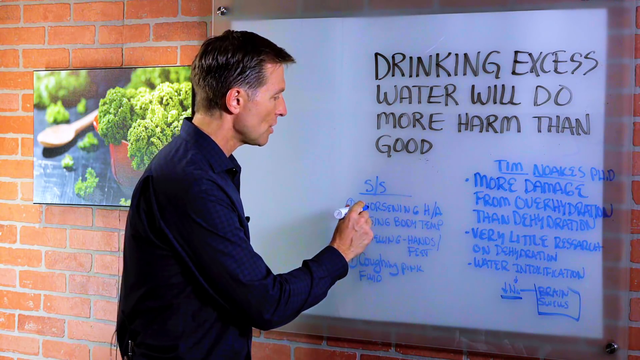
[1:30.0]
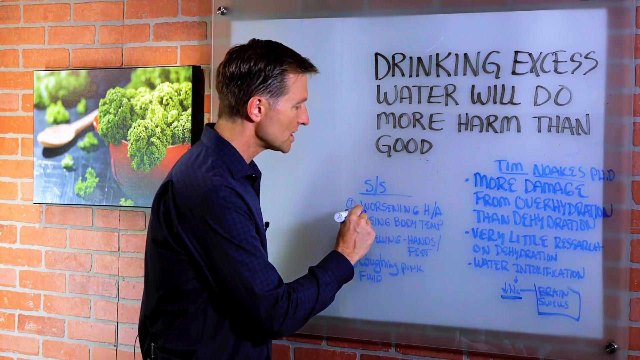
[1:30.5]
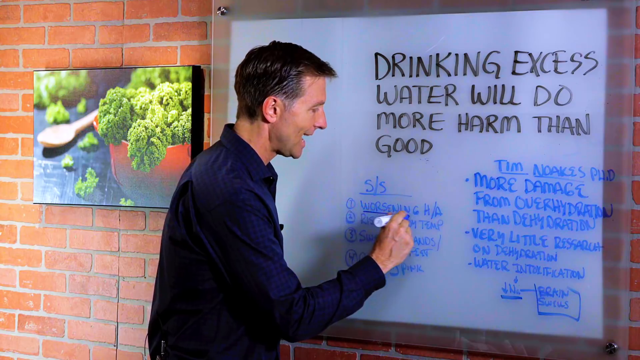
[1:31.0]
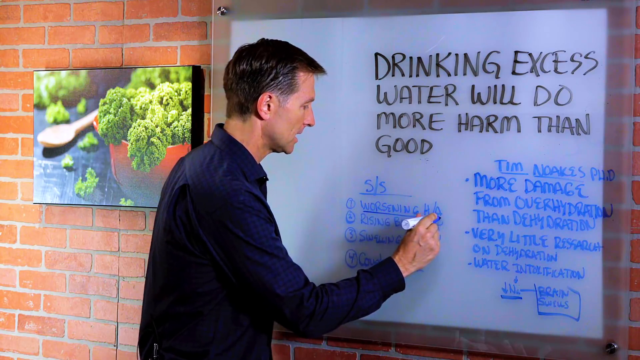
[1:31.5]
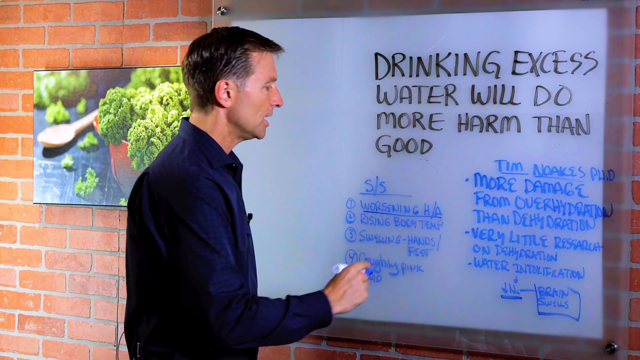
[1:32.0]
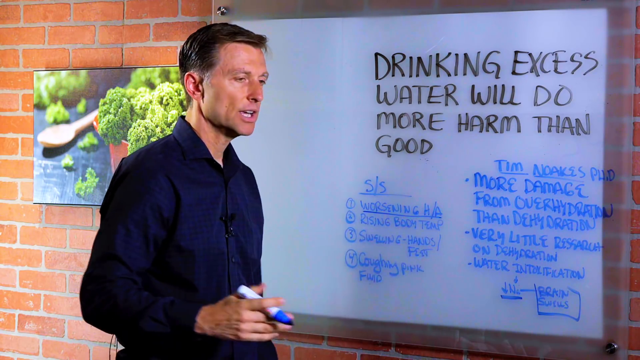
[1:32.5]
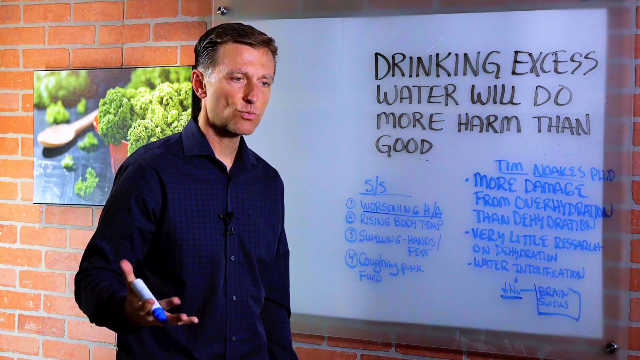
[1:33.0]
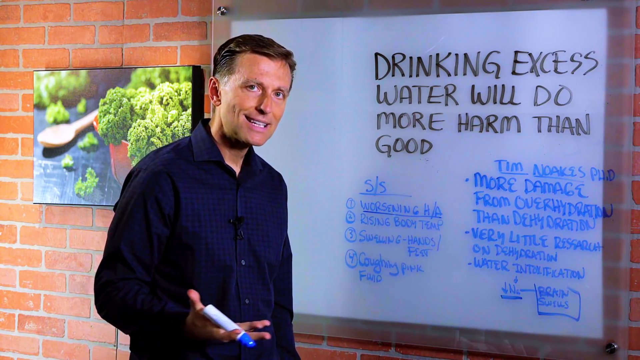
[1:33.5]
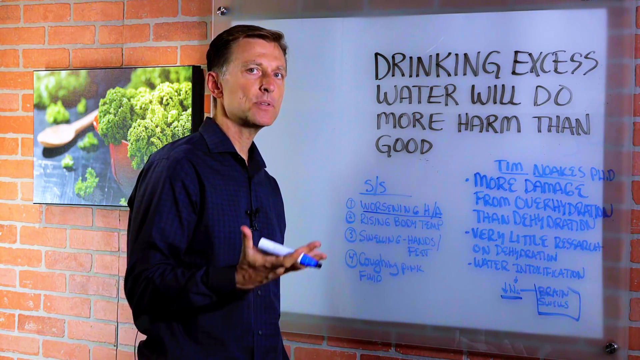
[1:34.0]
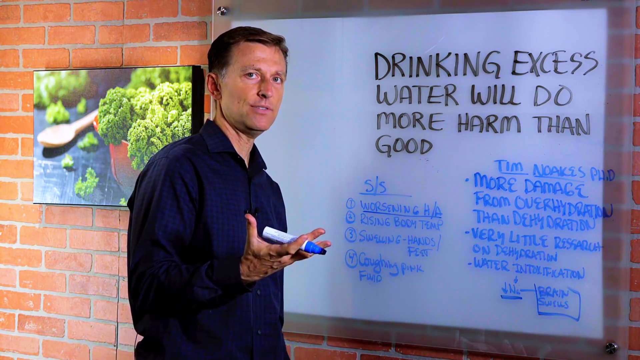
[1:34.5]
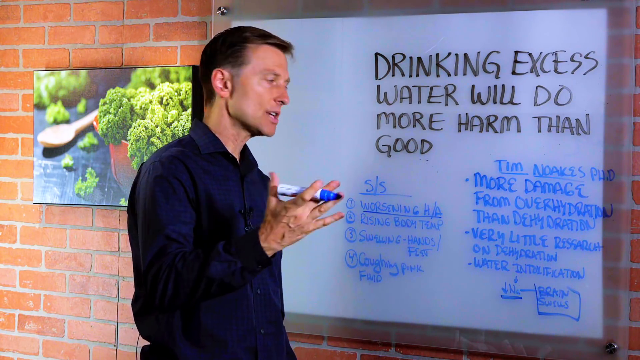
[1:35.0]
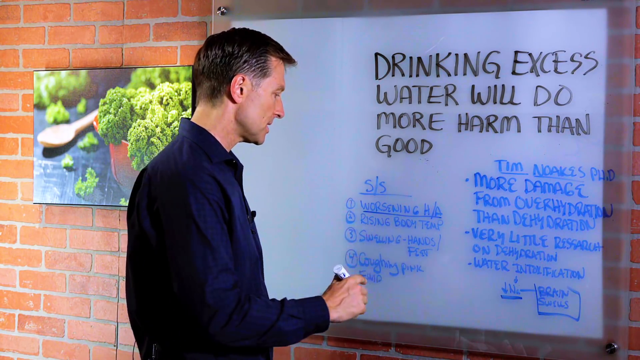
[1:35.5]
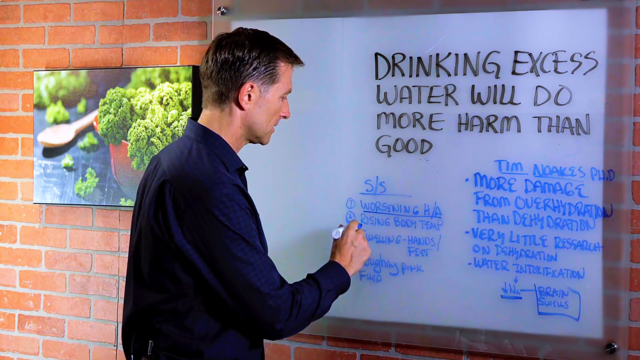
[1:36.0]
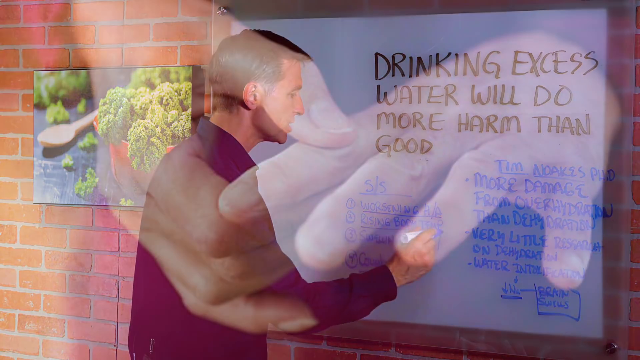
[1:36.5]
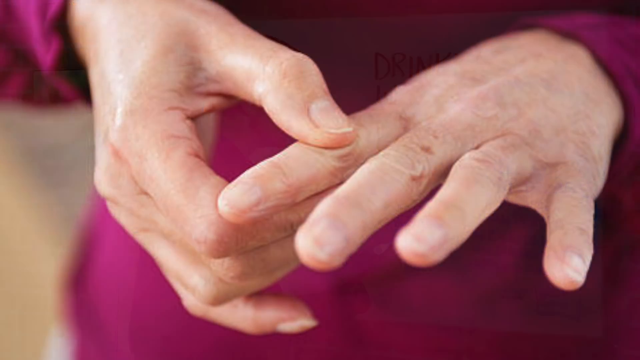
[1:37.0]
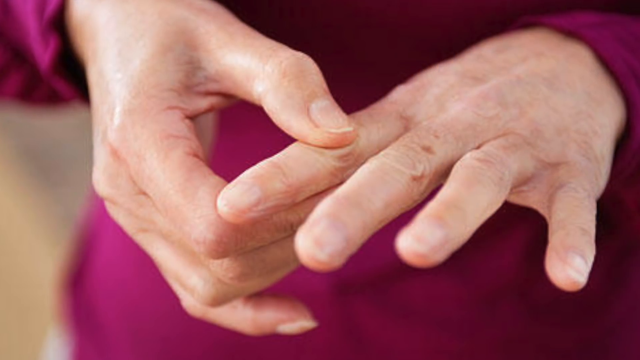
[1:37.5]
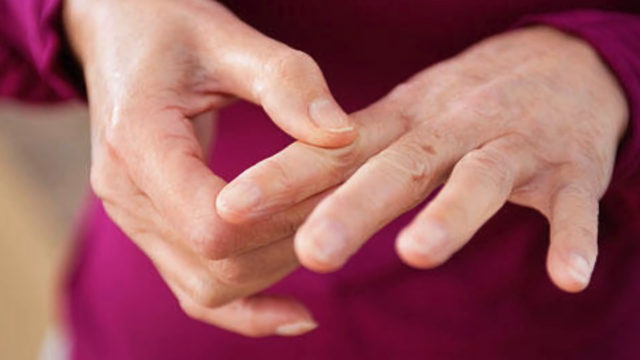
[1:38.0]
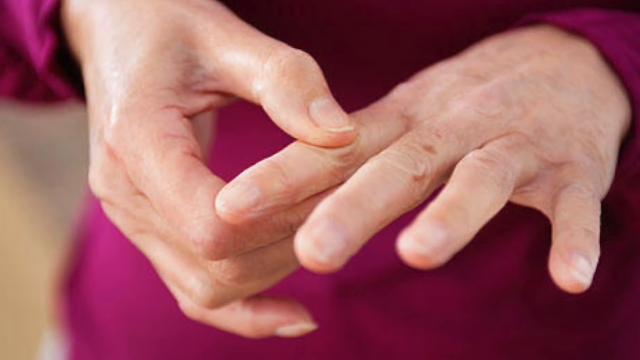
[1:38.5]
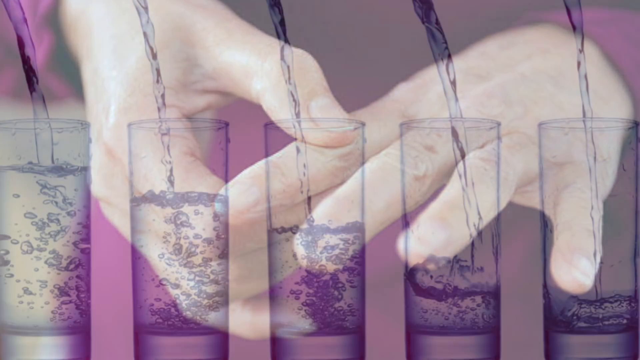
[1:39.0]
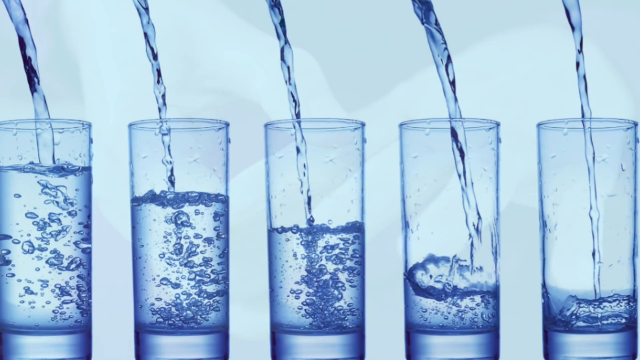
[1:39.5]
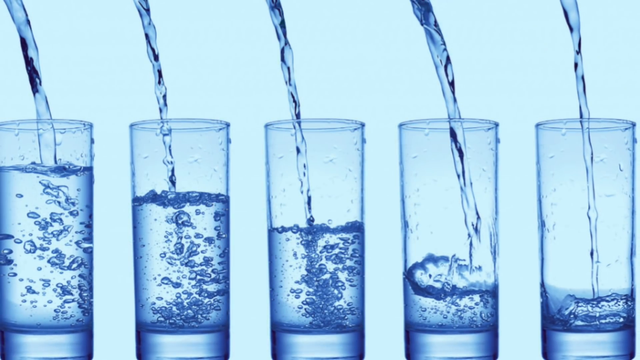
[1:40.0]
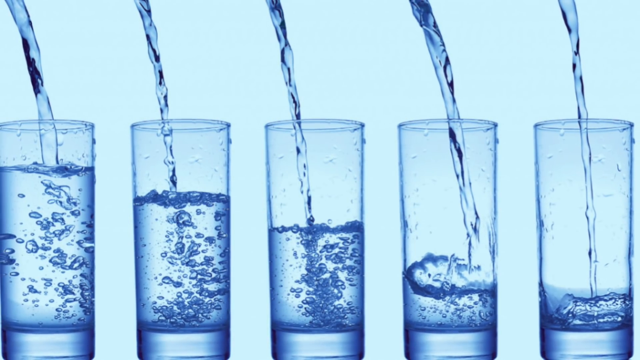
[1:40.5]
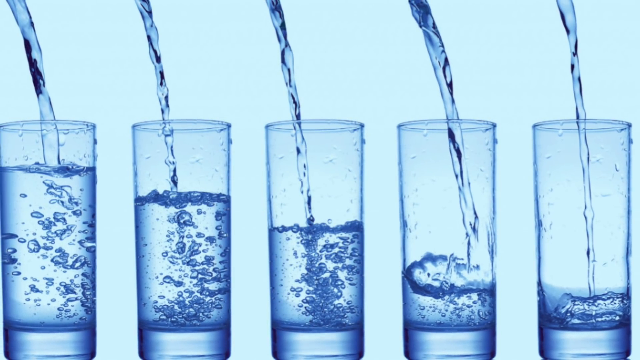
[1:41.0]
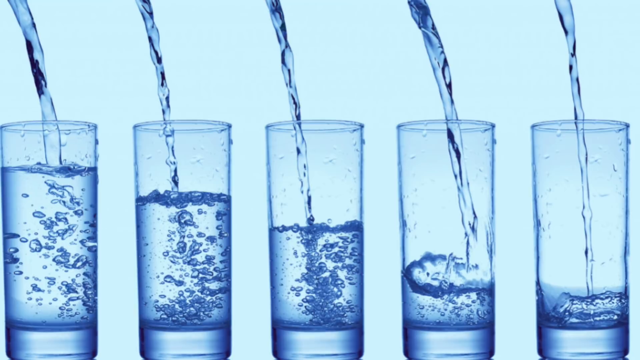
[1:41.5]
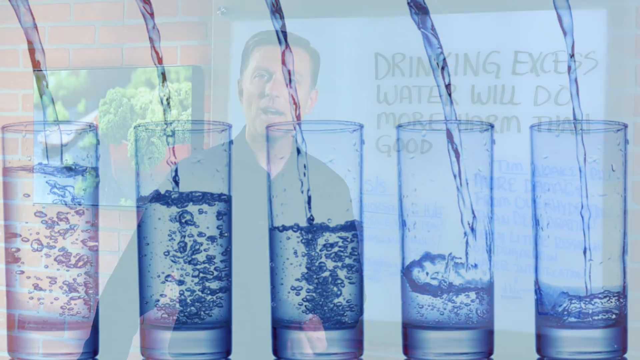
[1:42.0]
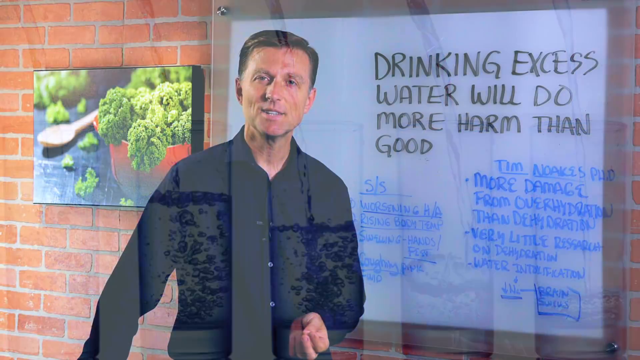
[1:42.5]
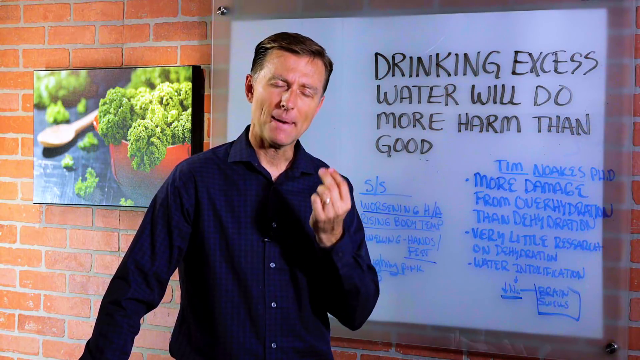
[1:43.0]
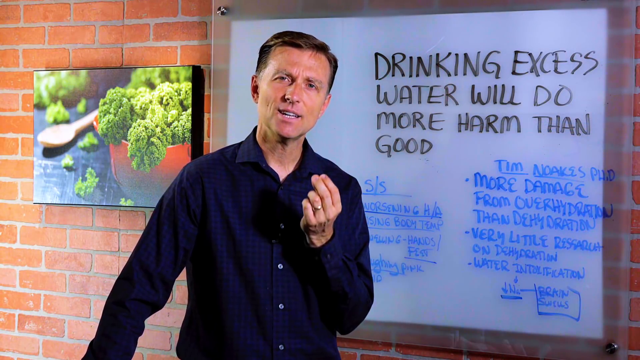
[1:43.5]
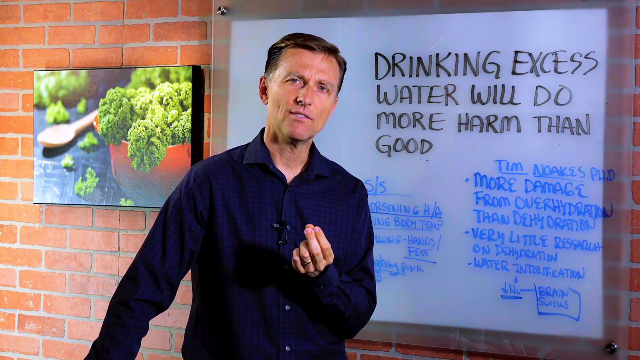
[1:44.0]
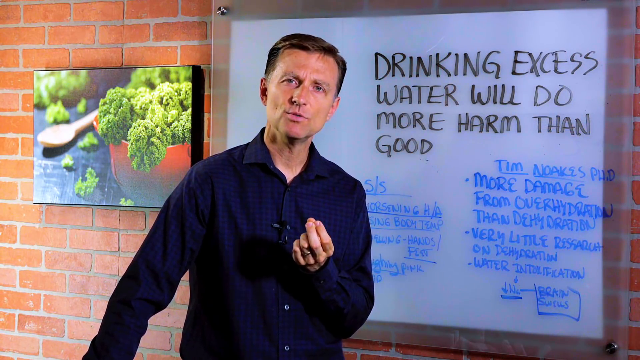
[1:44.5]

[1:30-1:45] With the blue Sharpie, the man underlines the first item in the "S/S" column, "worsening H/A," and then the second, "rising body temp." The video switches to a zoomed-in still image of someone's hands: the fingers of one hand are extended straight, and the other hand holds the index finger right at the middle knuckle, maybe indicating some kind of pain. Another still image shows five glasses with water pouring into them; the leftmost is the most full, and the water level gets lower and lower from left to right. The video then returns to the man, who continues to his next point on the whiteboard.